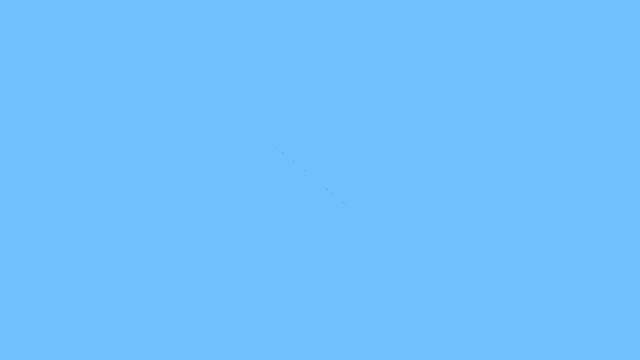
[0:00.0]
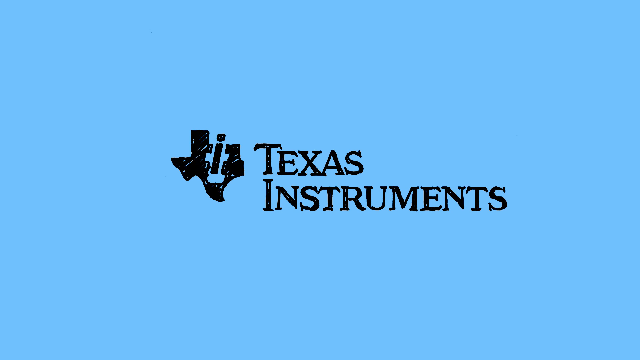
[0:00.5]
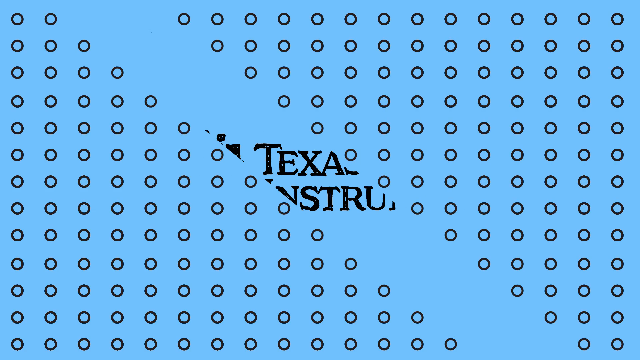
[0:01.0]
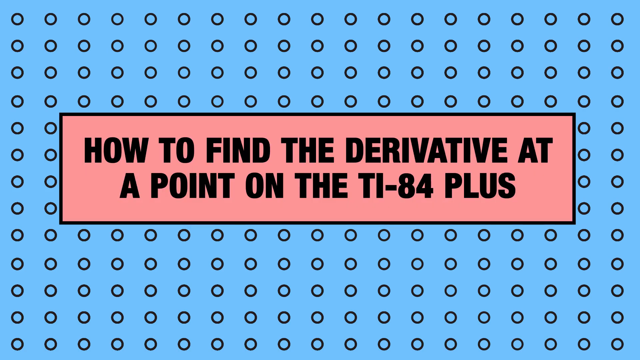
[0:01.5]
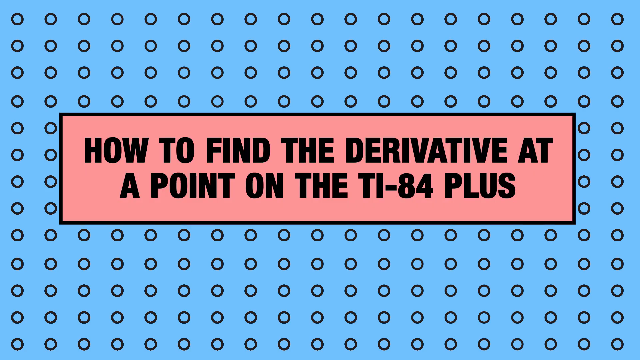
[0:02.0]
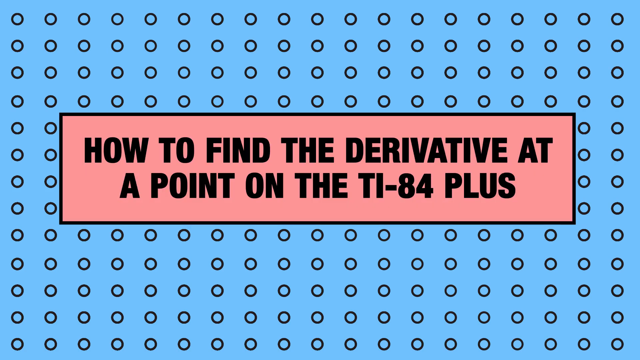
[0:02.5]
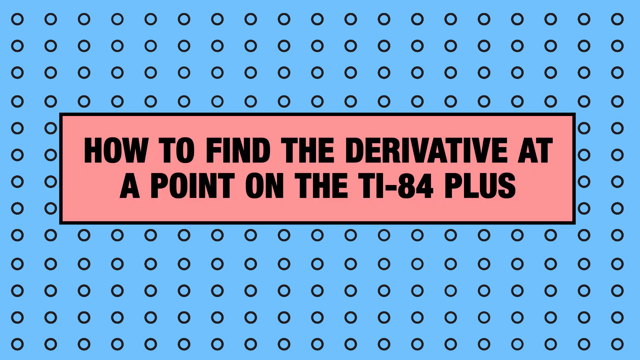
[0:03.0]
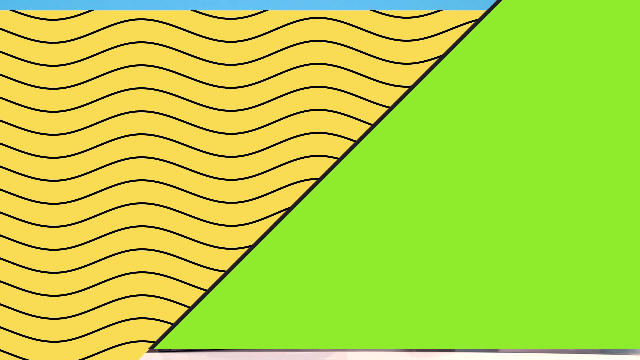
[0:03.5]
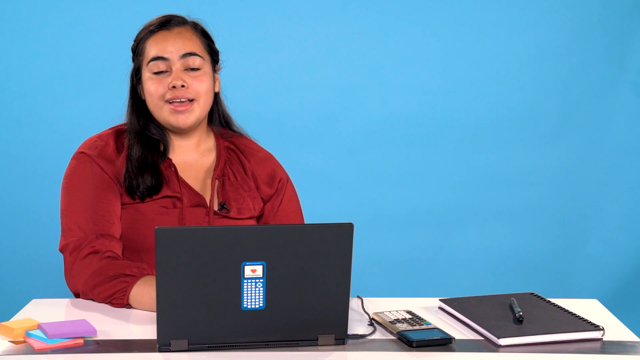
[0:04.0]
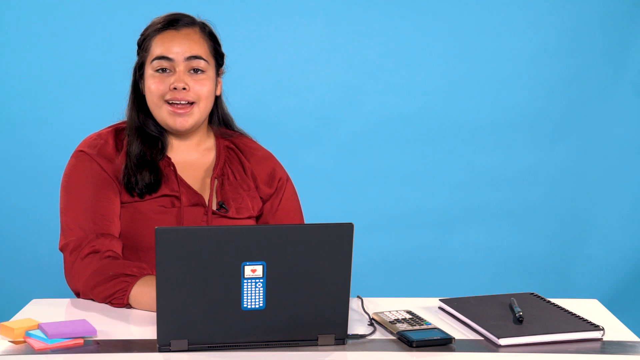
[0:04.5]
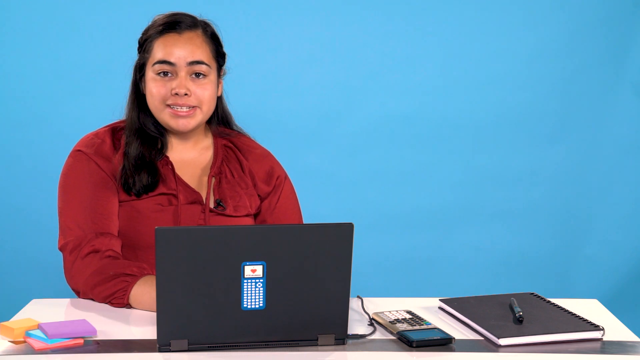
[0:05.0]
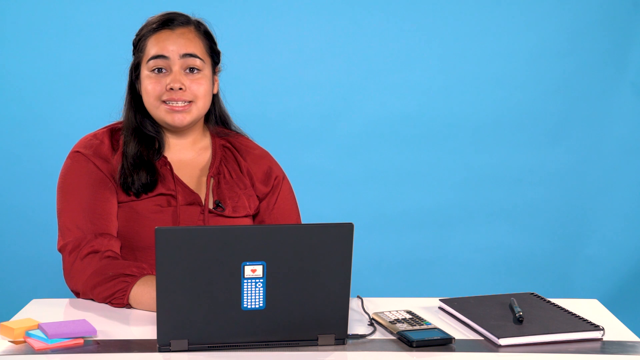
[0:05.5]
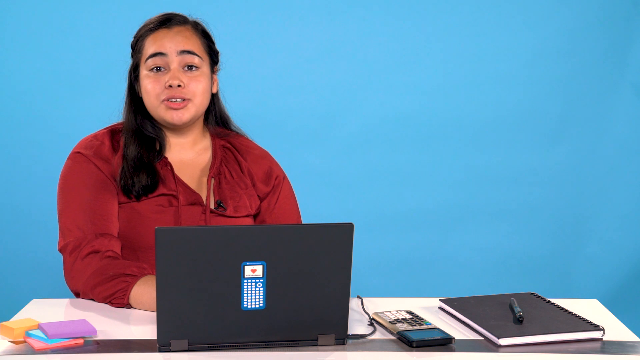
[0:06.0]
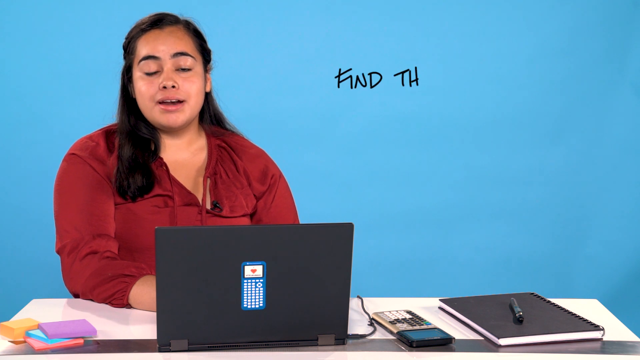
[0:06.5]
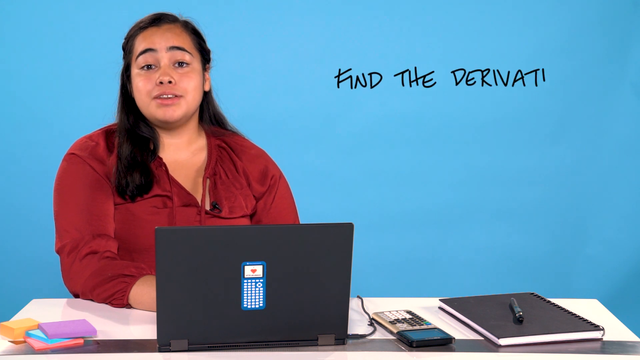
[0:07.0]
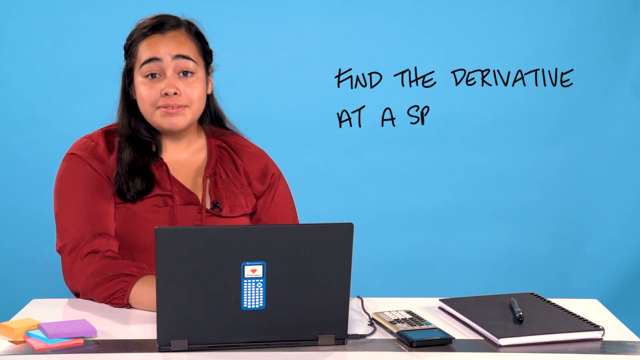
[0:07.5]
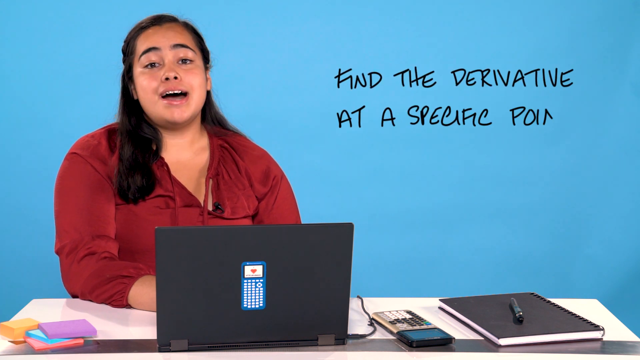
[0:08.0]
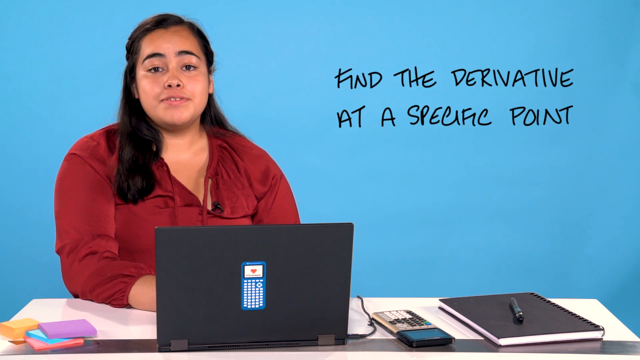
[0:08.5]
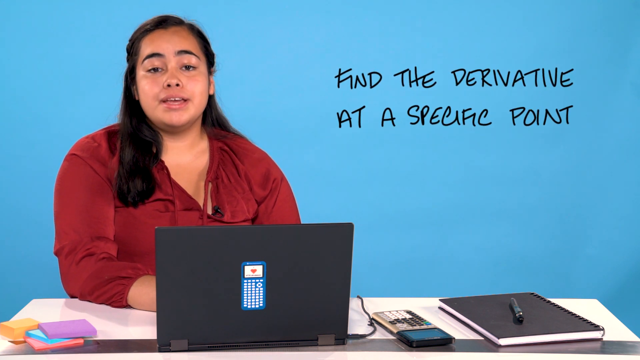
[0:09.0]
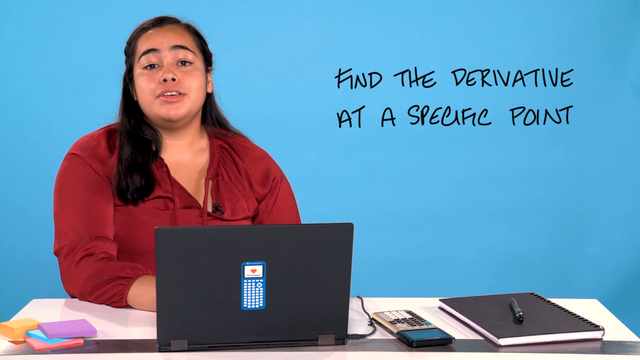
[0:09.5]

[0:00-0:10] A woman who seems to be in her early 30s is sitting down. She wears a brownish top, has long black hair and a light complexion, and has a laptop in front of her. She seems to be working on the laptop, with a book on the side and what seems to be a calculator. On-screen text reads "Texas Instruments, how to derive the derivative and also find the derivative at a specific point." She seems to be talking. Her backdrop is a white wall, and the text is written in black.